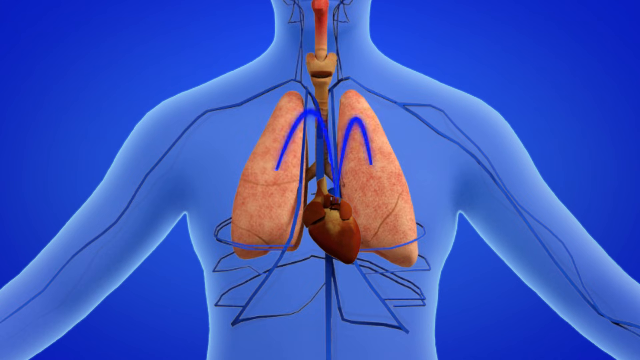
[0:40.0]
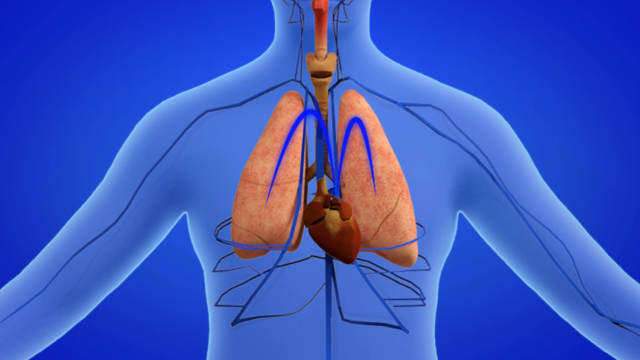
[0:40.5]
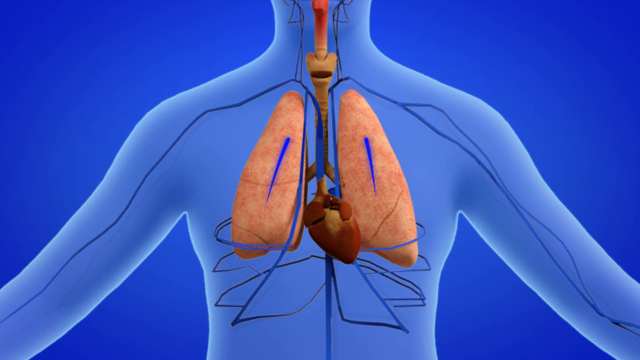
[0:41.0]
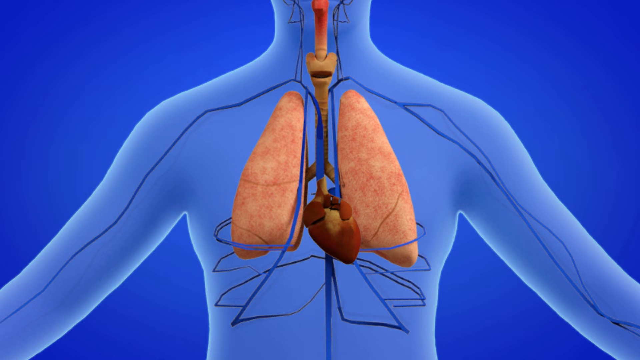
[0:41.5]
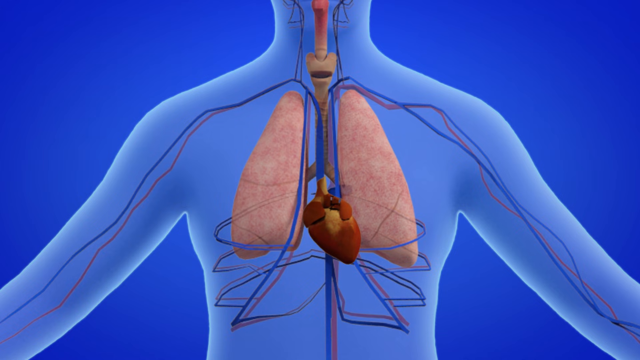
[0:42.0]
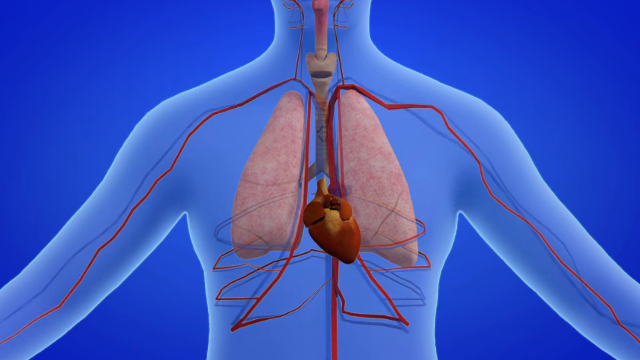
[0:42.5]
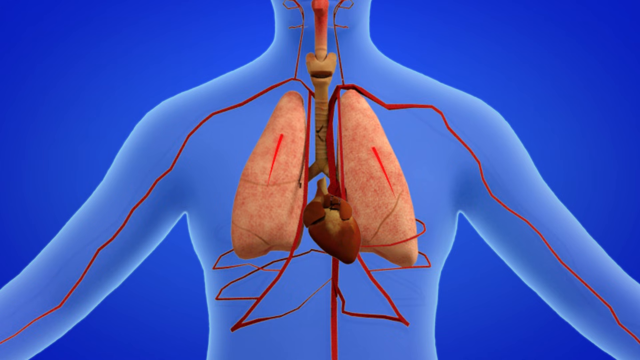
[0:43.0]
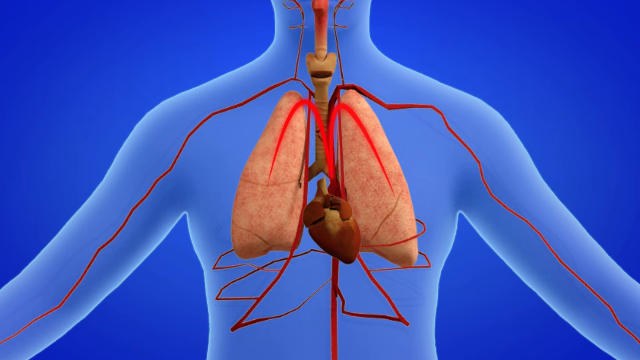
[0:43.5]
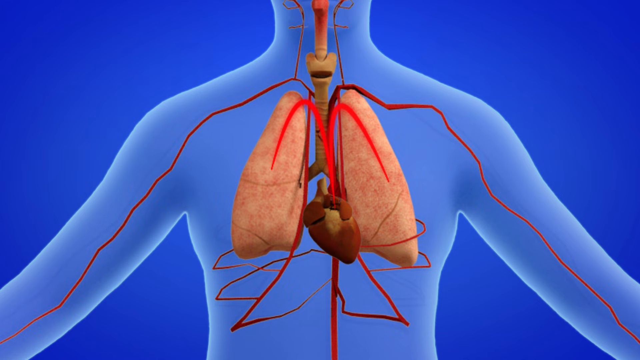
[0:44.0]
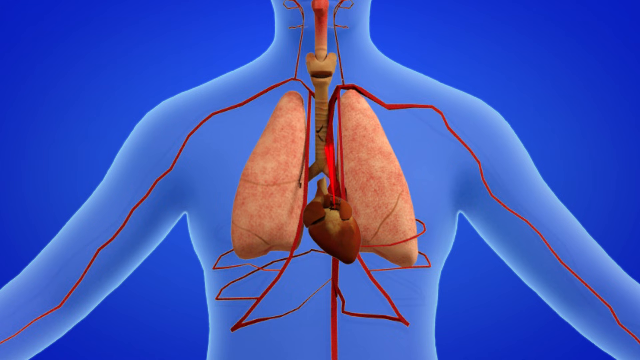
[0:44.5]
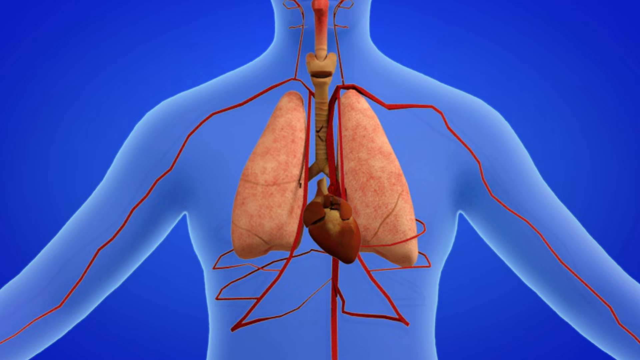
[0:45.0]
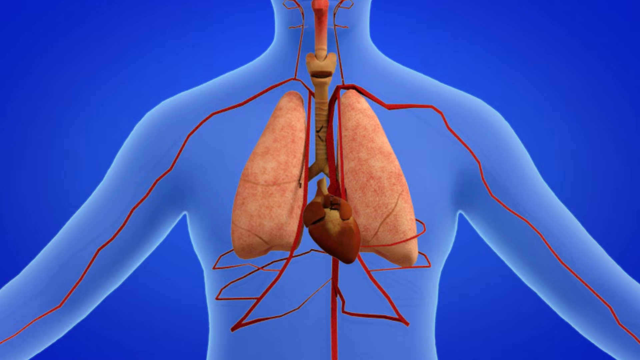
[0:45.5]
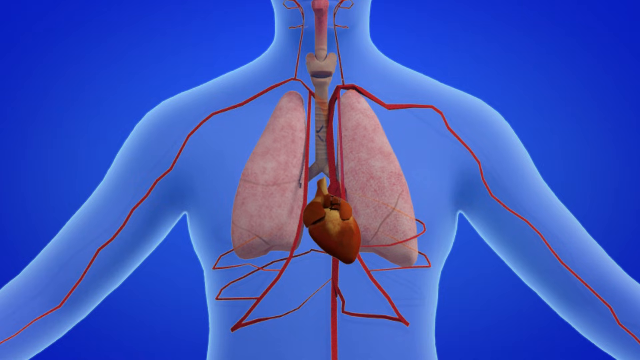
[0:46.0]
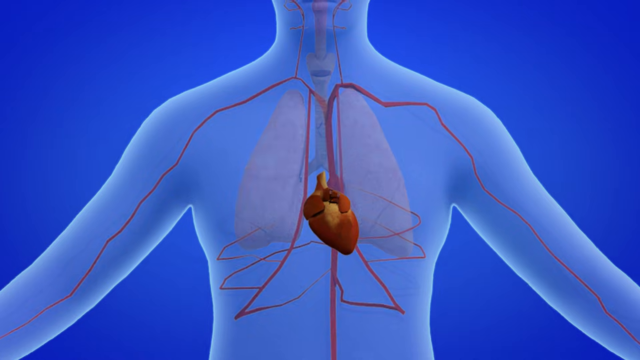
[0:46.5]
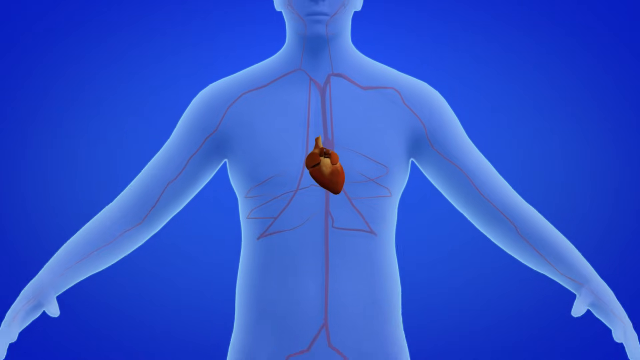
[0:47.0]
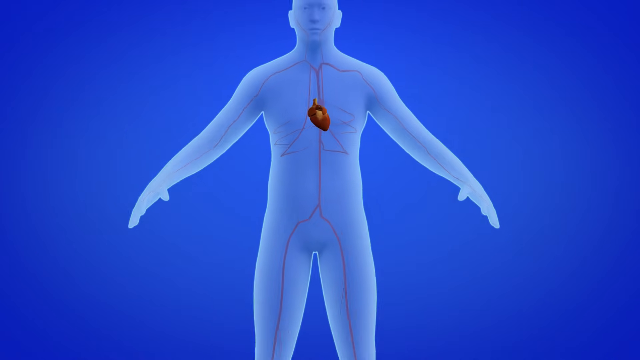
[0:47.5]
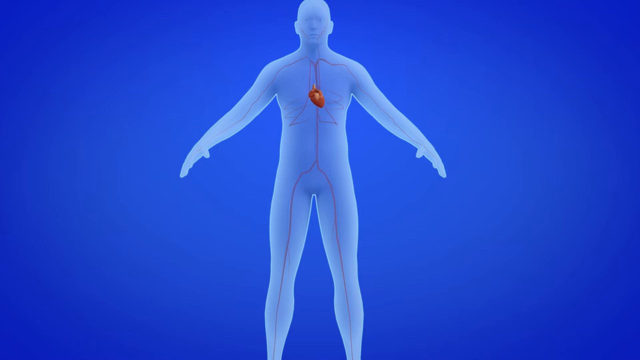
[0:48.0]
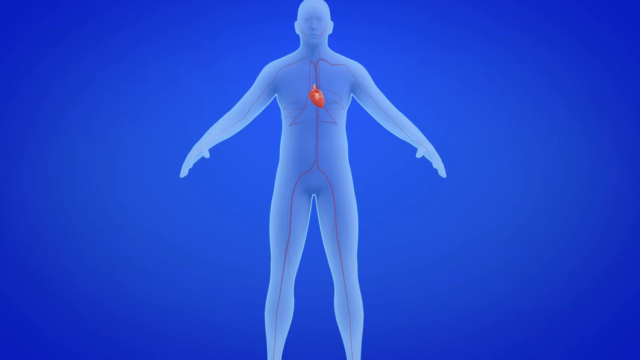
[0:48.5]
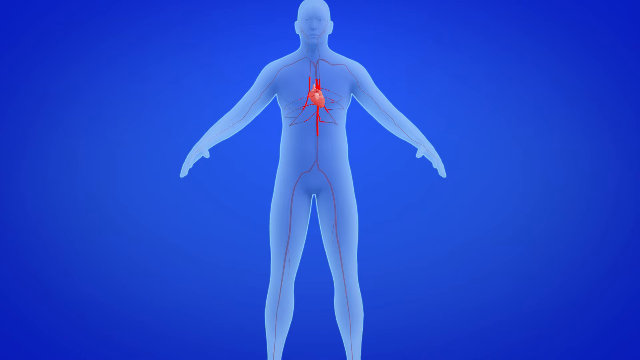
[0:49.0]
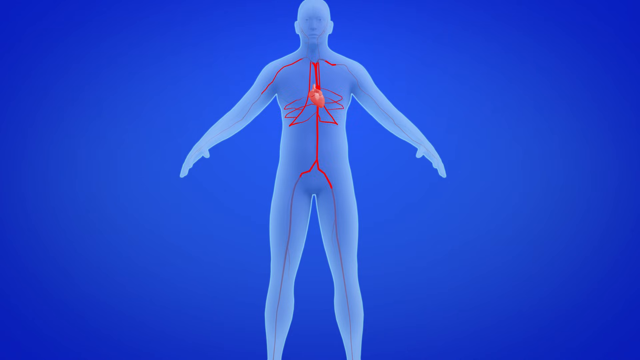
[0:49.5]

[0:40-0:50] The heart is shown with what appears to be the respiratory system, seemingly illustrating how they work together. Red lines connect with the lungs. Only red lines, the arteries, are shown in this short part.